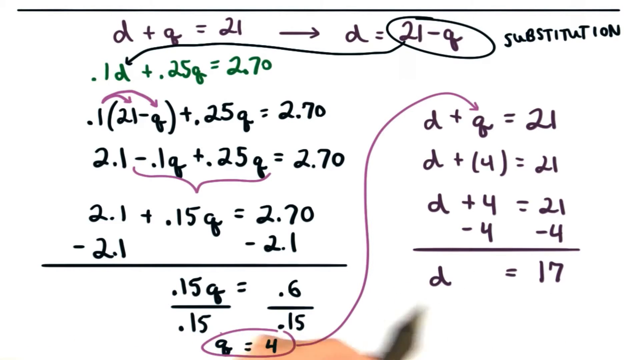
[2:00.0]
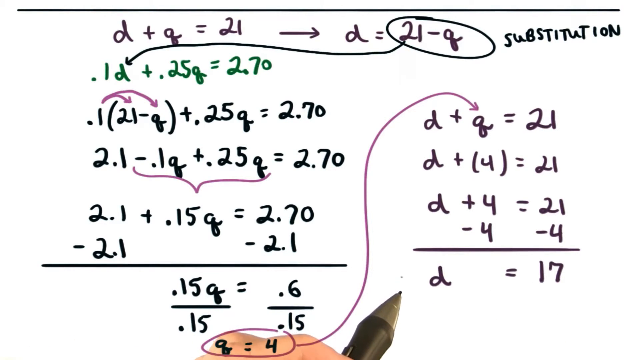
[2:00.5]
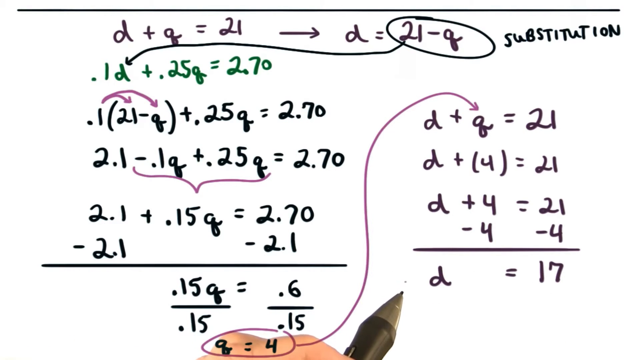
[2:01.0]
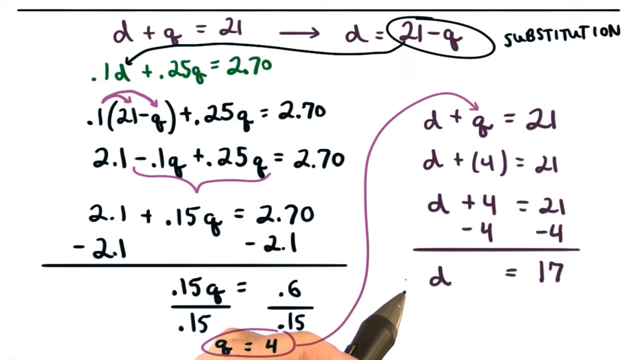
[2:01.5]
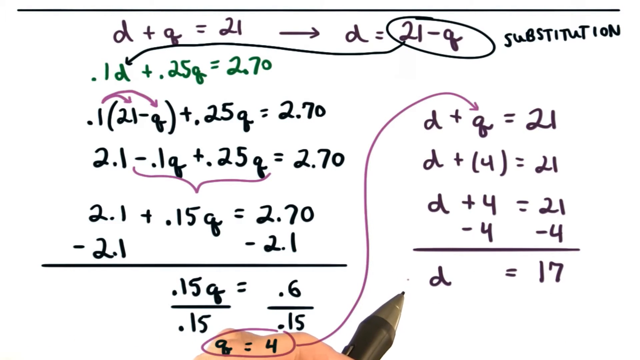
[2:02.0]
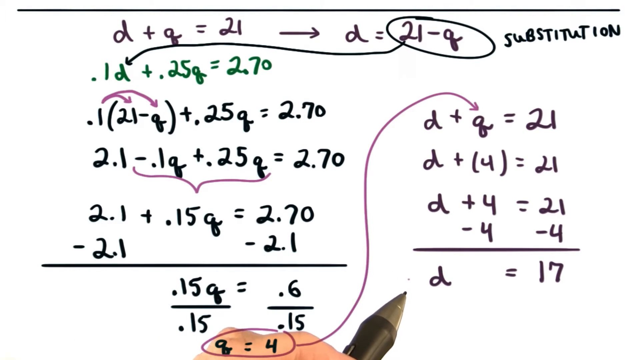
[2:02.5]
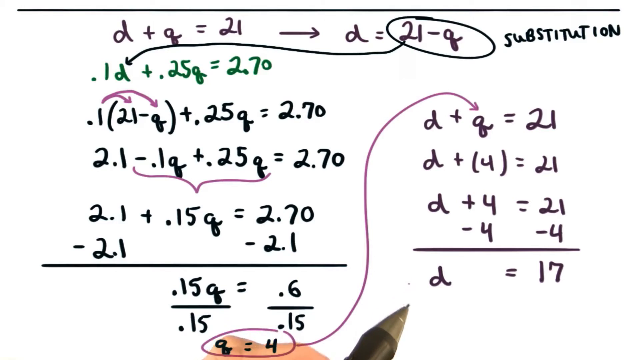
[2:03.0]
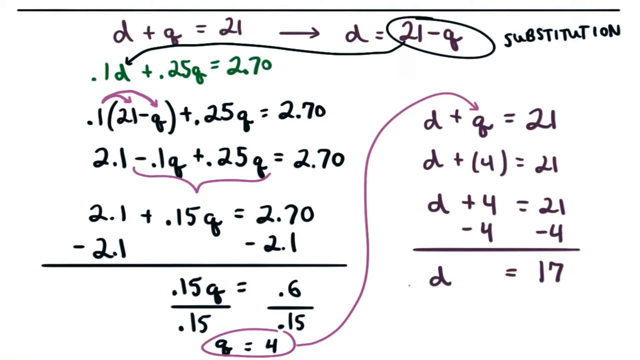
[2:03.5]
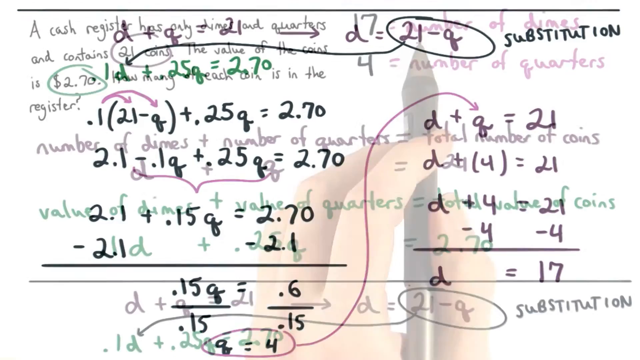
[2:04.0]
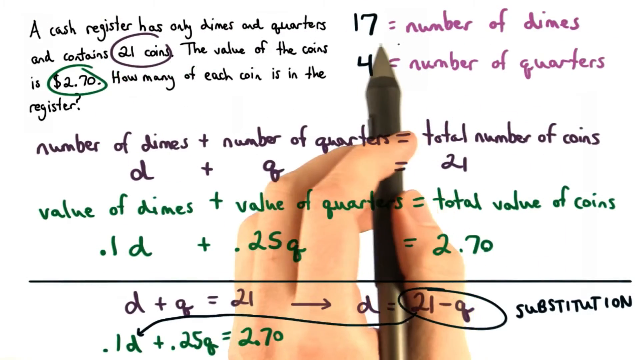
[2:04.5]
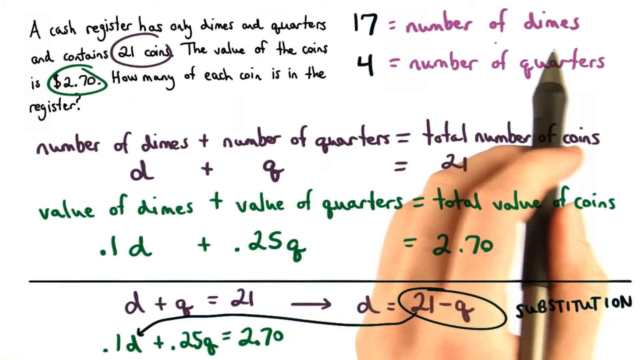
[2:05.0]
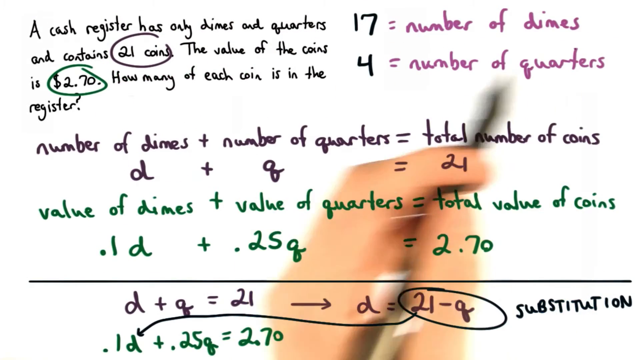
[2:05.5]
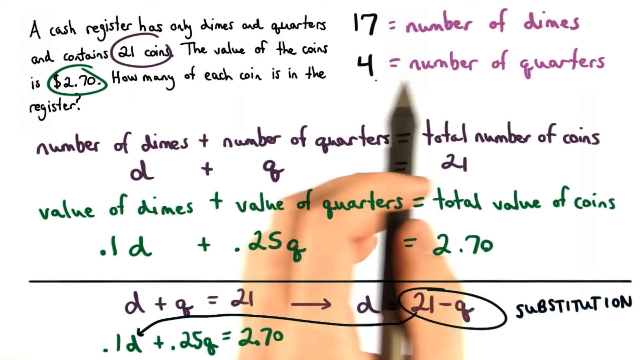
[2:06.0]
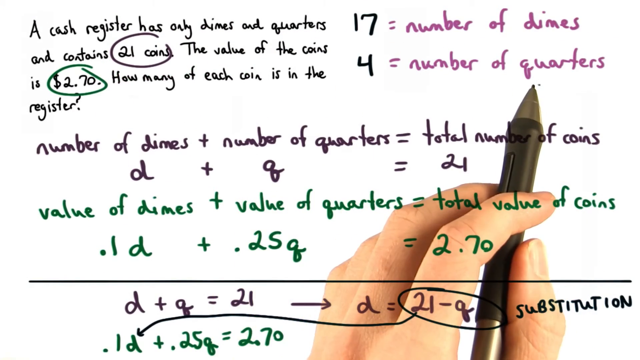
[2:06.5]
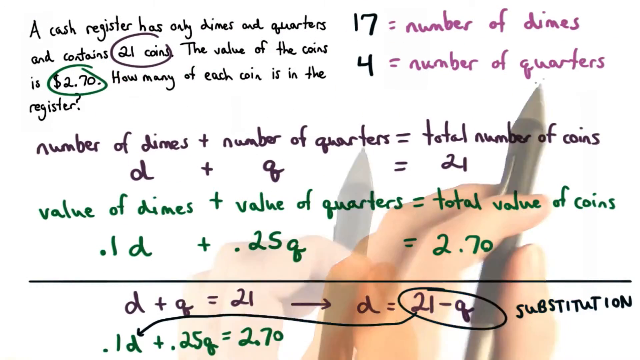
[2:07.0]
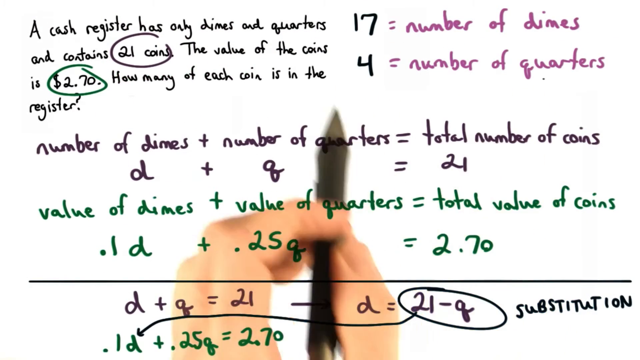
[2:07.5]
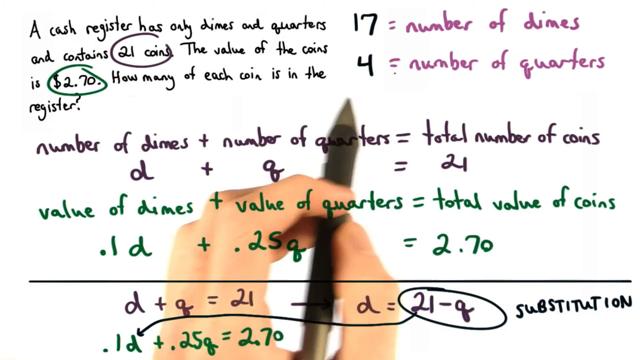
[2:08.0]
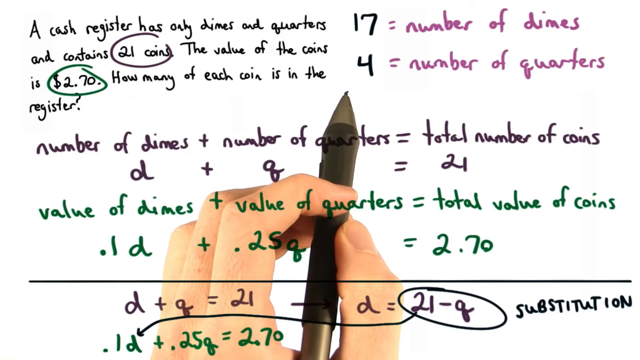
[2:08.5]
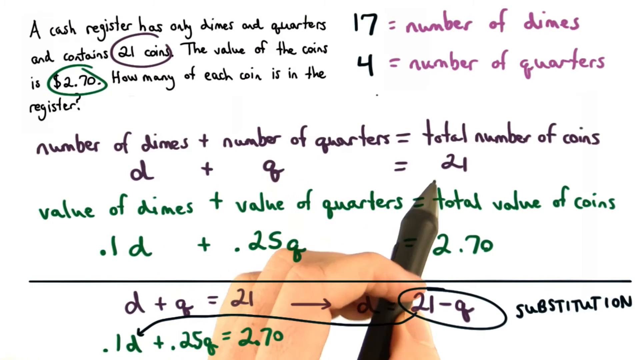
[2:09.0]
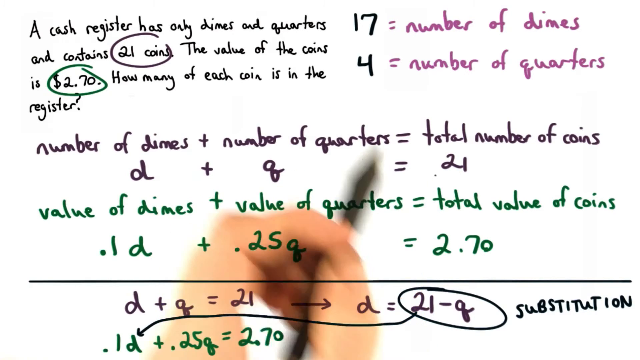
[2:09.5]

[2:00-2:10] The whiteboard, which is apparently a projection, has a horizontal line across the top of the screen separating this work from the original setup of the problem. On the first line is "d + q = 21" with an arrow to the right to "d = 21 - q"; "21 - q" is circled with the word "SUBSTITUTION" in capitals beside it. An arrow runs from the circle, right about the 2, to the 0.1d on the next line, which is in green and says "0.1d + 0.25q = 2.70". The next line, in black, is "0.1(21 - q) + 0.25q = 2.70", with two purple lines extending from the top of the 0.1 to the tops of the 21 and the q, indicating it will be distributed. On the next line it has been distributed, in black: "2.1 - 0.1q + 0.25q = 2.70", with a curly brace connecting the 0.1q and the 0.25q to show they will be added. The next line shows that done, in black: "2.1 + 0.15q = 2.70". On the next line 2.1 is subtracted from each side, followed by a horizontal line and "0.15q = 0.6". Lines beneath each of those terms divide out the 0.15 to isolate q, and this extends off the bottom of the screen. From the bottom of the screen toward the middle, a purple arrow comes up to the right side, to "d + q", pointing at the q, followed by "= 21". Then comes "d + (4) = 21", substituting the answer for q, then "d + 4 = 21" without parentheses, then 4 subtracted from both sides, a horizontal line marking the finished operation, and "d = 17". "q = 4" then comes into view at the bottom from off the screen. The pen moves beneath it, and the view returns to the original problem, where "4 = number of quarters" and "17 = number of dimes" are filled in. The pen makes a circular motion around the answer.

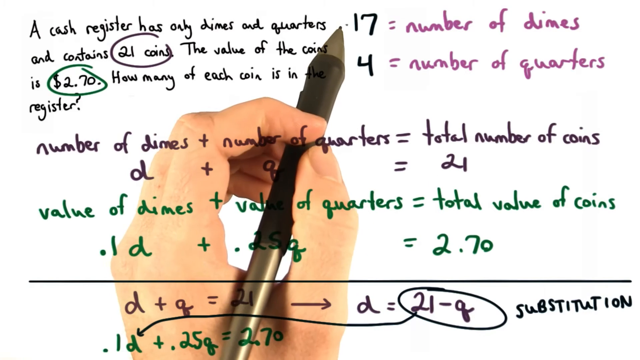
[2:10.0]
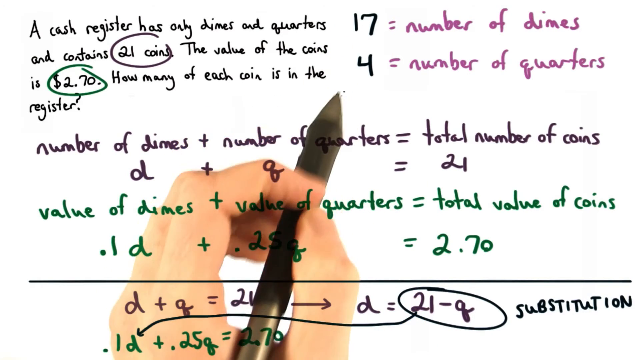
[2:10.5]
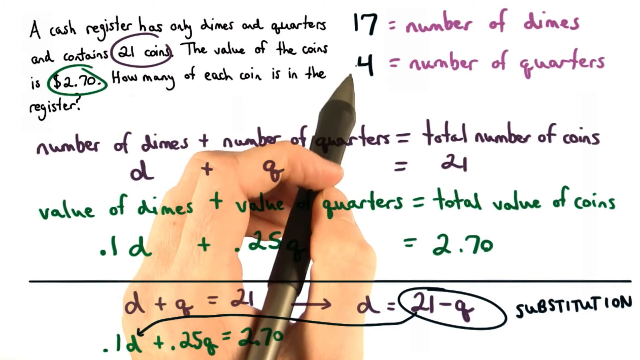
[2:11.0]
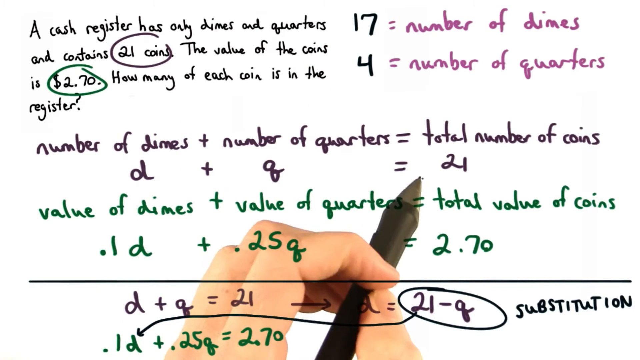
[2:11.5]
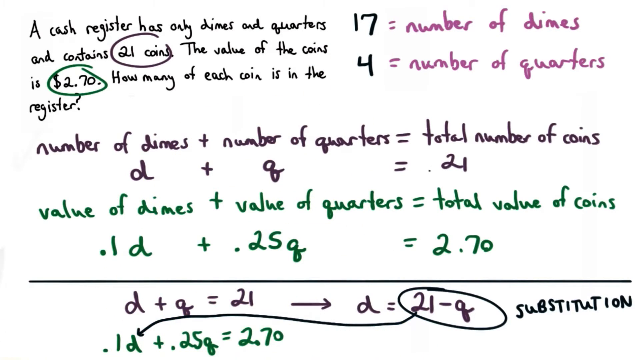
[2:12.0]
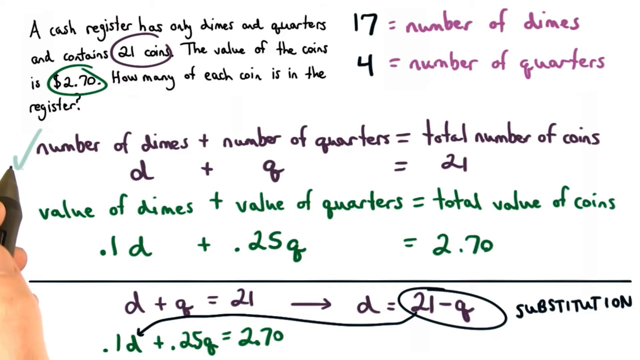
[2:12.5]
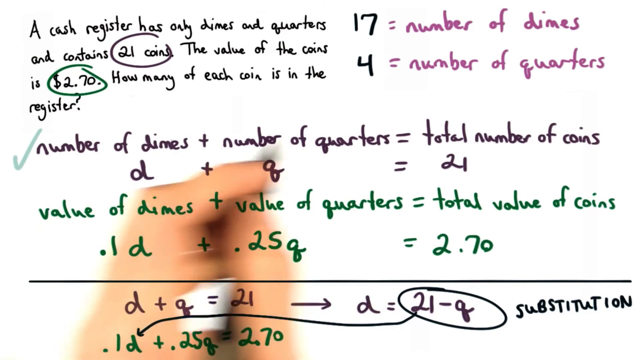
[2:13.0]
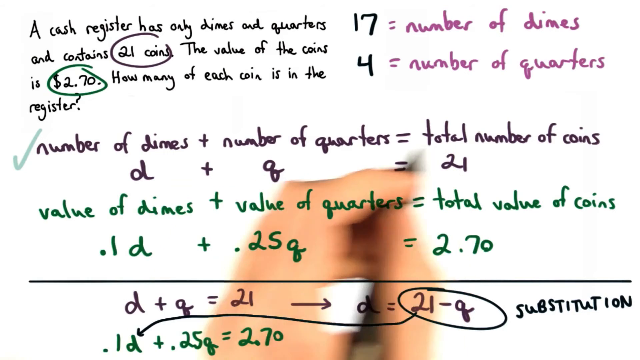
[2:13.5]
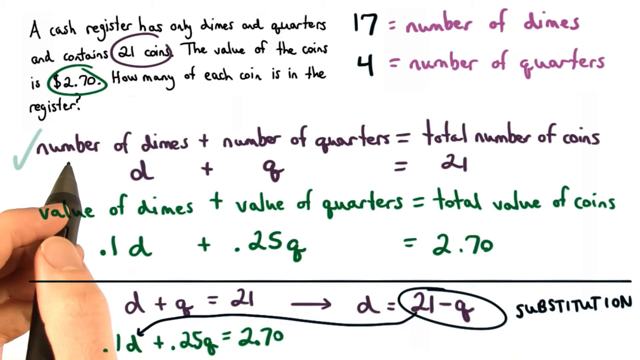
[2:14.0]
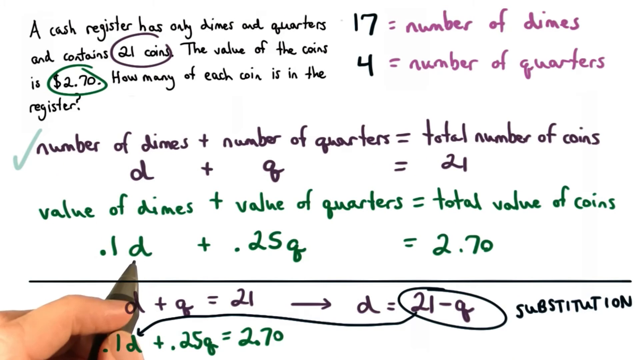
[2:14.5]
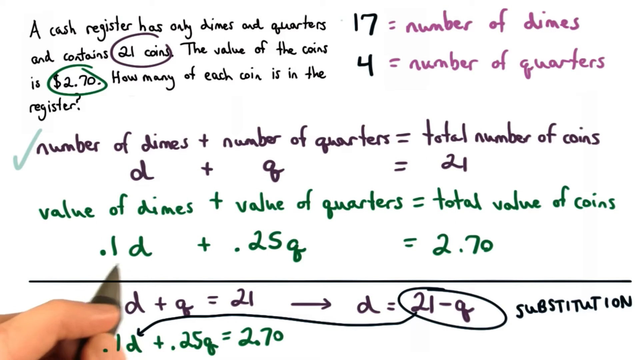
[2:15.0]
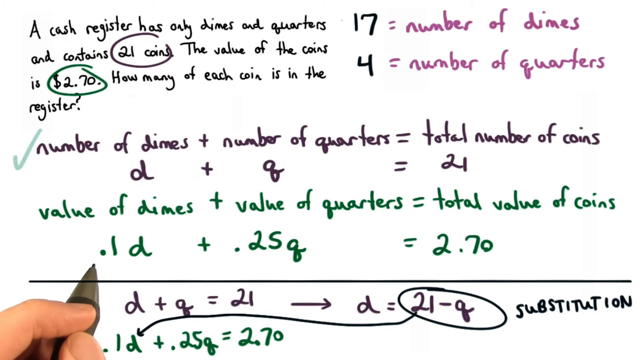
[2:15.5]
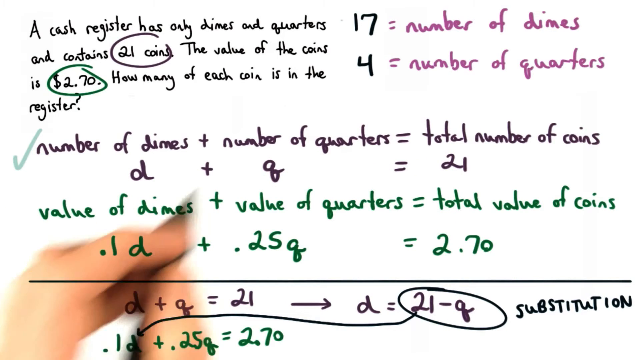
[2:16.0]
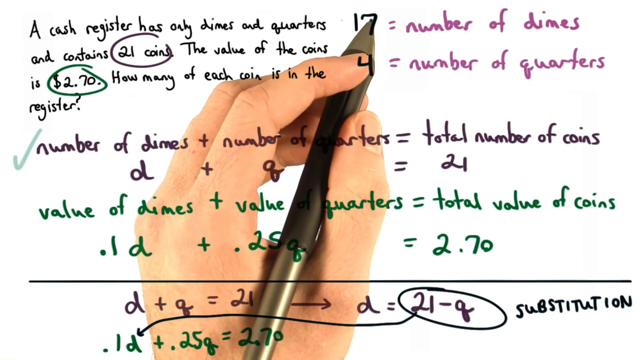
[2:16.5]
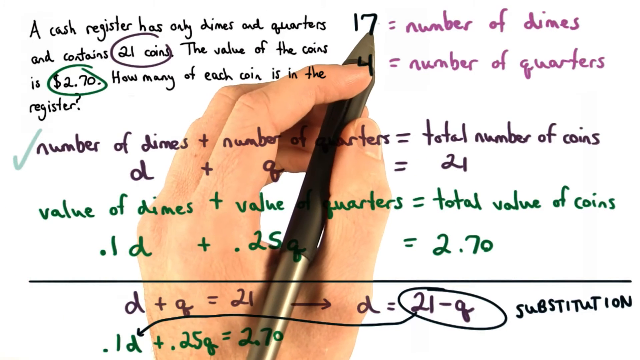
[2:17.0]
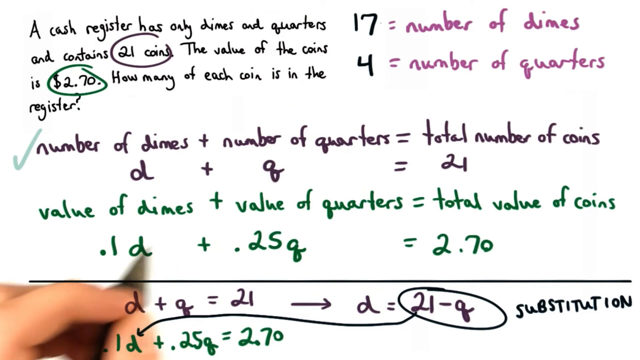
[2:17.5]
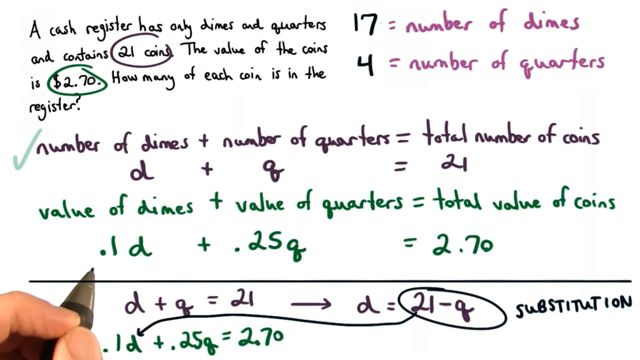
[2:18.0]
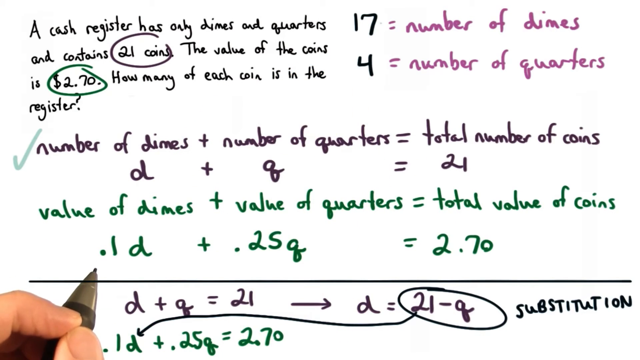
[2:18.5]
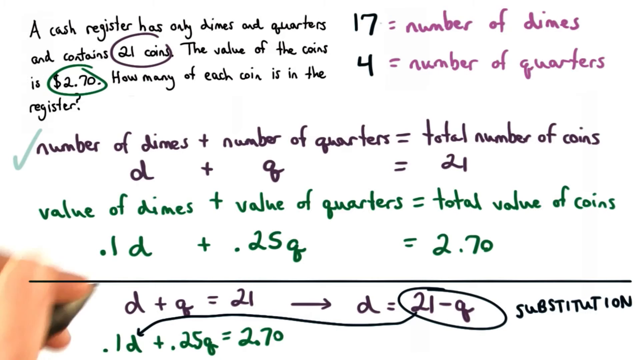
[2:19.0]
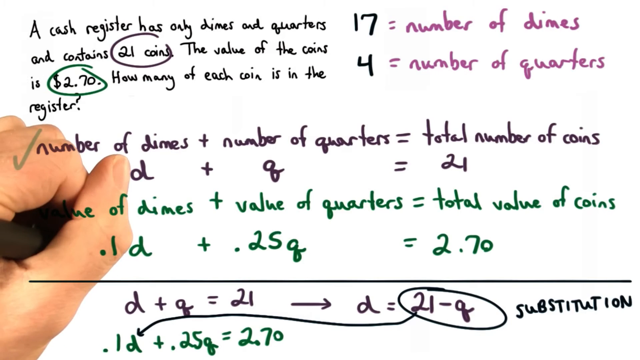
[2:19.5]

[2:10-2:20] The same screen as before is shown. The upper left quadrant has "a cash register has only dimes and quarters and contains 21 coins. The value of coins is $2.70. How many of each coin is in the register?" Beside it in the upper right quadrant is the answer: a black 17 followed by purple "= number of dimes", and a black 4 followed by purple "= number of quarters". Across the middle of the screen in black is "number of dimes + number of quarters = total number of coins" and "d + q = 21". Beneath that in green is "value of dimes + value of quarters = total value of coins" and "0.1d + 0.25q = 2.70". A horizontal line follows, then "d + q = 21" with an arrow to the right to "d = 21 - q" and the word "substitution", with "21 - q" circled. The hand holding the pen takes up the middle of the screen, gripping it with the thumb on the bottom of the pen and the forefinger and middle finger steadying it, the tip at the 17. The pen moves up and down to highlight the 17 and the 4, moves down to the 21, then makes an underlining kind of motion beneath the black line about number of dimes. A faded green check mark appears next to the words "number of dimes". The pen moves down to the 0.1d and emphasizes it, moves up to the 17 and emphasizes that, then returns to the 0.1d.